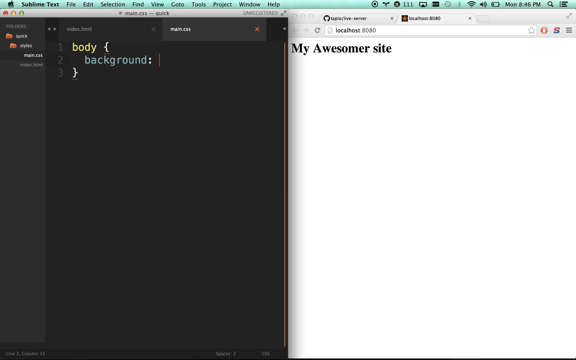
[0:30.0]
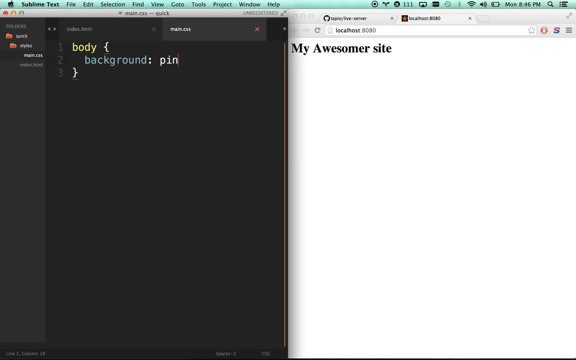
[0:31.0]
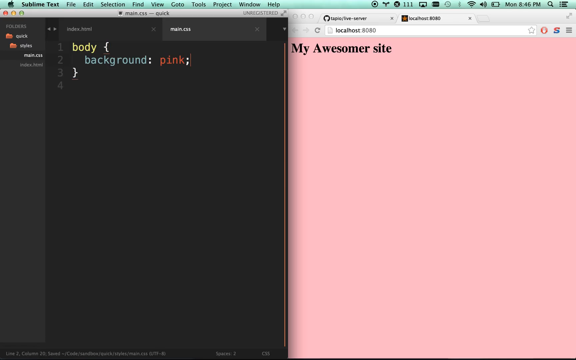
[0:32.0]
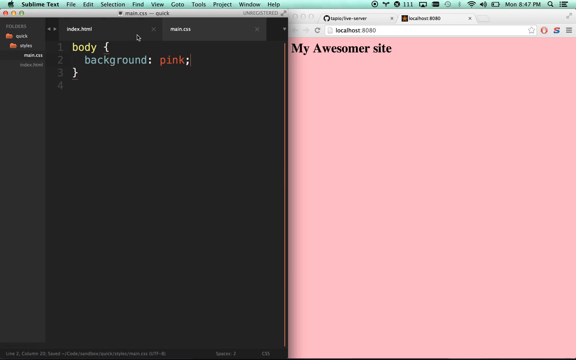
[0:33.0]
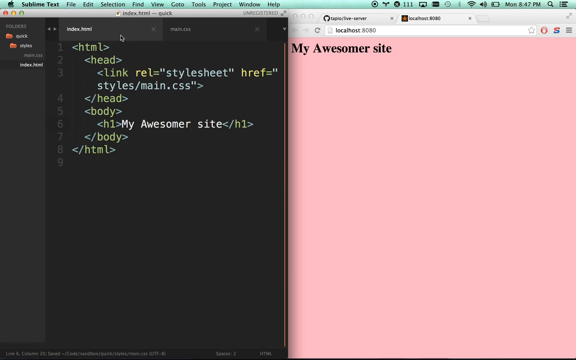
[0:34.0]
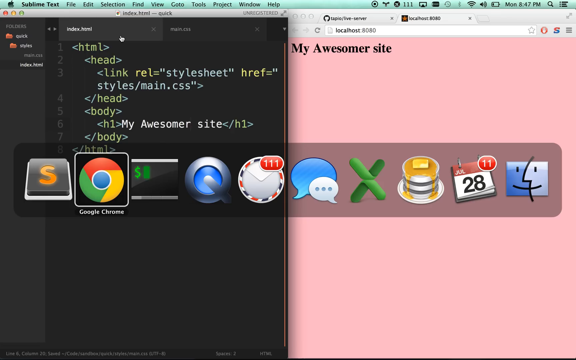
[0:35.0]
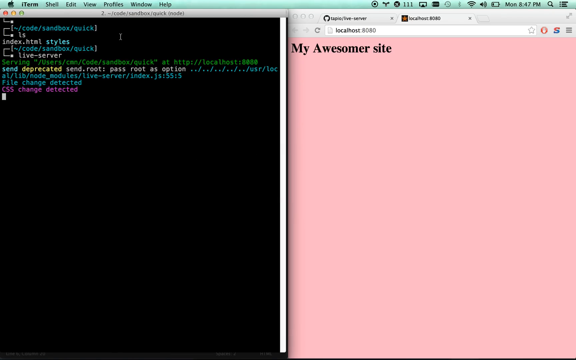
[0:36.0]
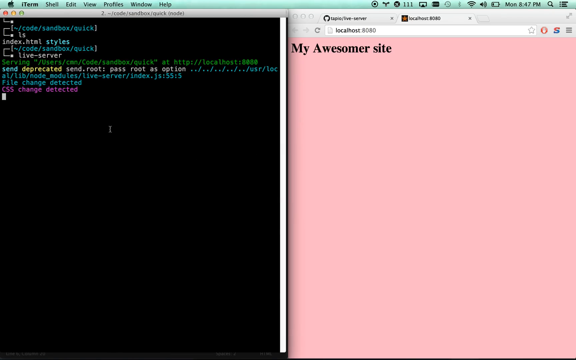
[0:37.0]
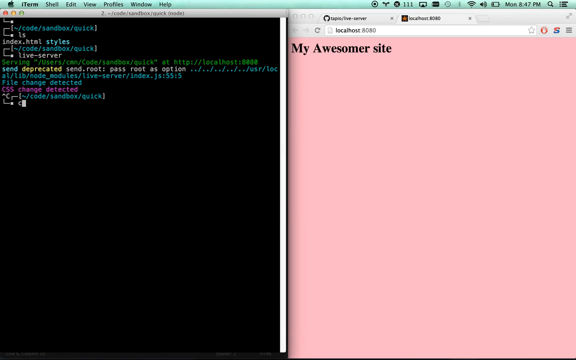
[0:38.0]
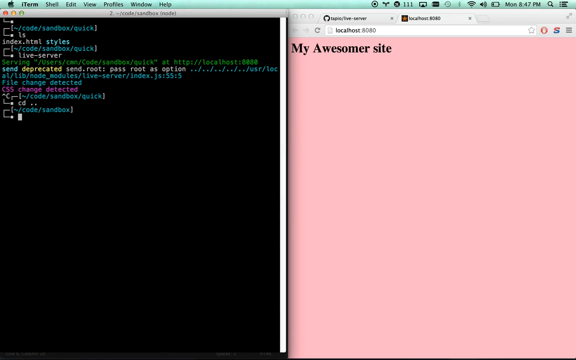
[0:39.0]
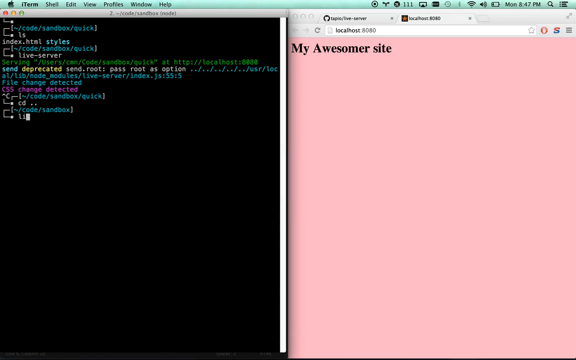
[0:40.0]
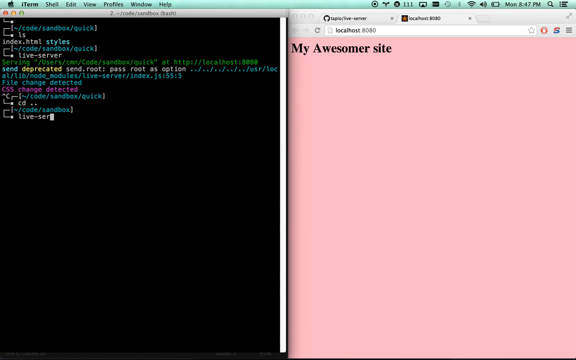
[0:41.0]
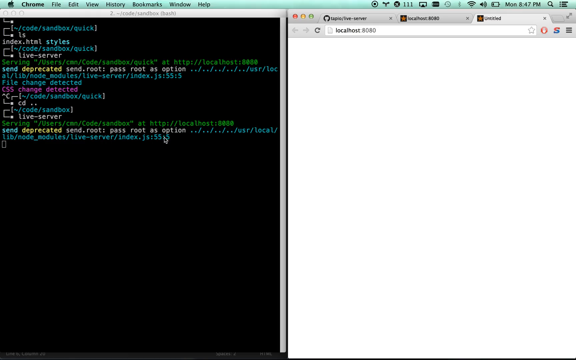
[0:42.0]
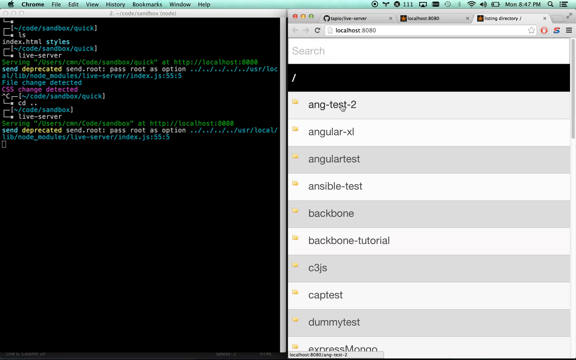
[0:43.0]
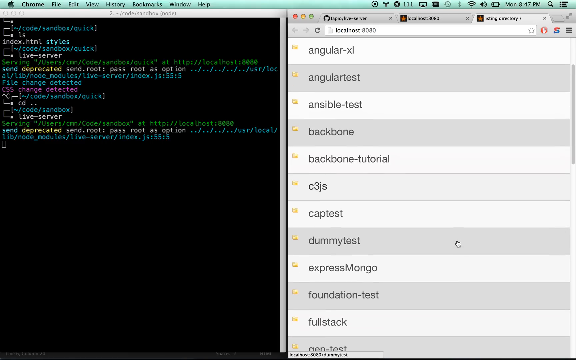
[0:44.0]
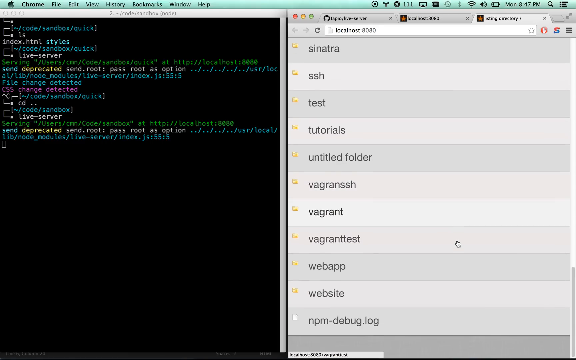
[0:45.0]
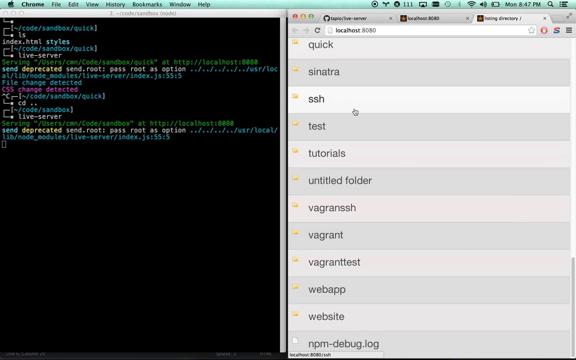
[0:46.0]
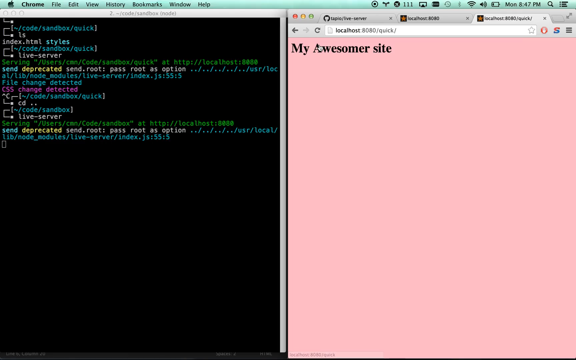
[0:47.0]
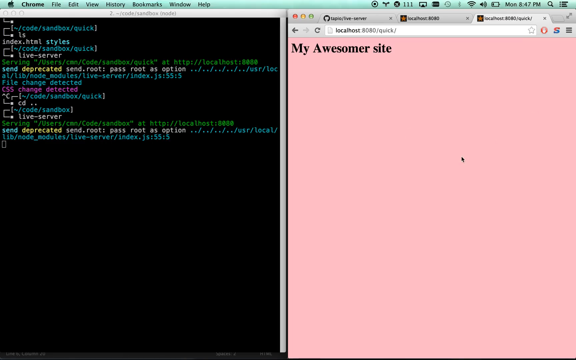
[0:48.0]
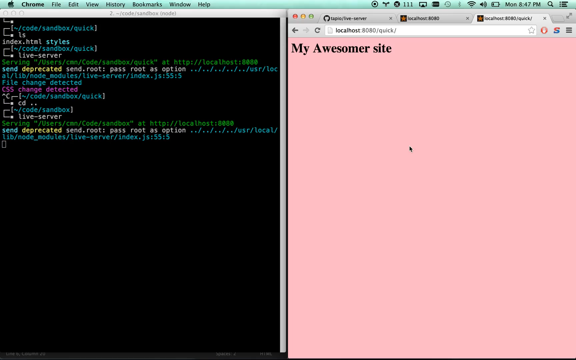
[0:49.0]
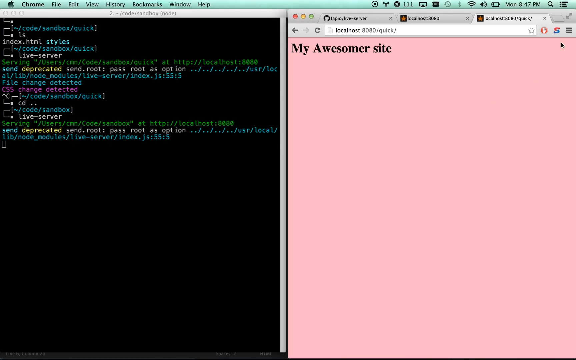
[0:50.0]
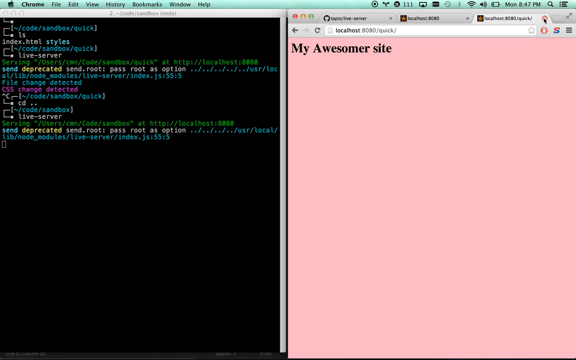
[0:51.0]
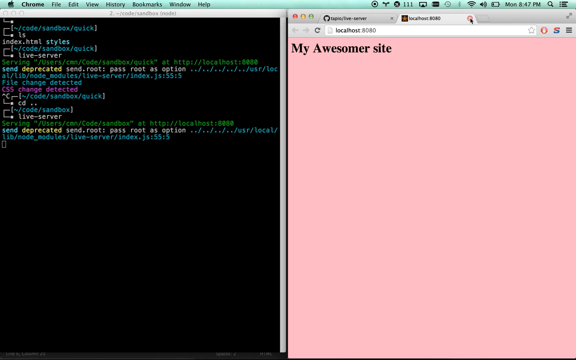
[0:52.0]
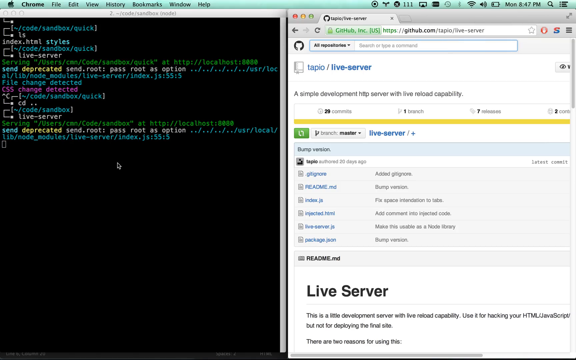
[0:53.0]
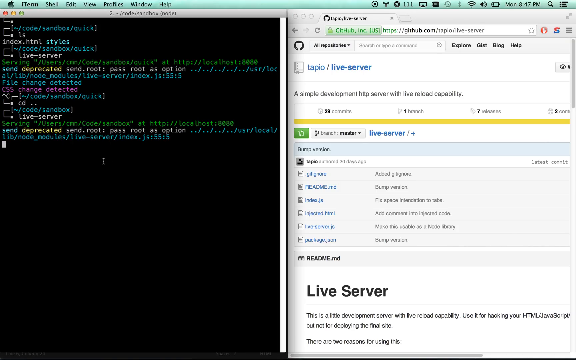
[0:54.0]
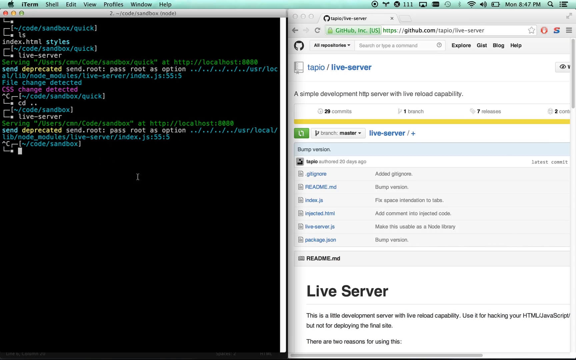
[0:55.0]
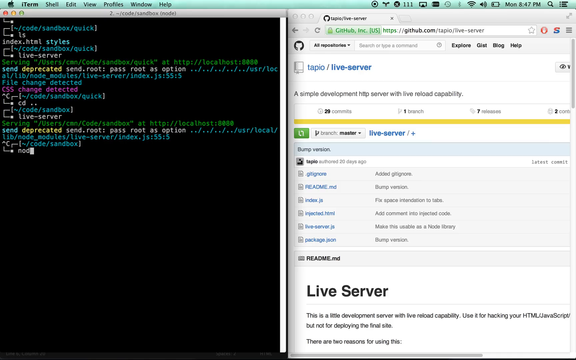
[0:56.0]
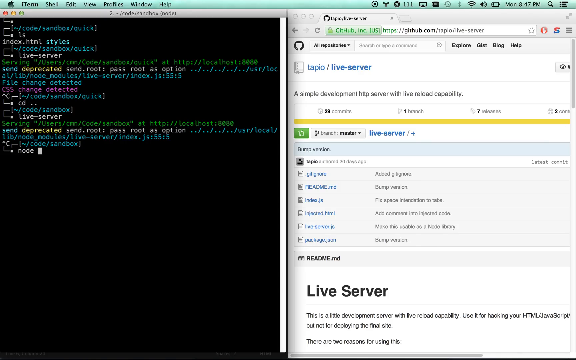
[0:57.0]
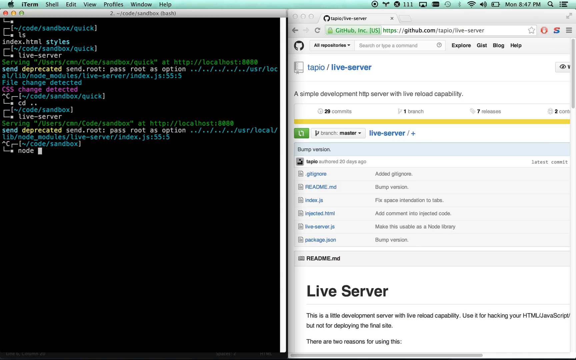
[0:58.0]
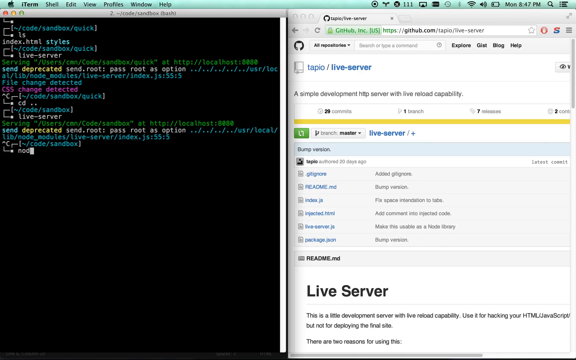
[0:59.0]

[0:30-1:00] More commands are entered, with the person switching between the terminal and Sublime Text. The commands typed in both programs change the characteristics of the window shown in Google Chrome on the right side of the screen, giving examples of how those commands look once they appear in the Chrome HTML tab. The person alternates between the three programs using keyboard shortcuts, which makes the dock appear briefly over the screen, covering part of it for a moment with each switch.